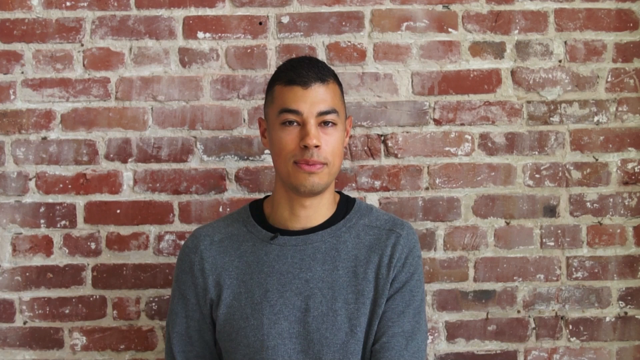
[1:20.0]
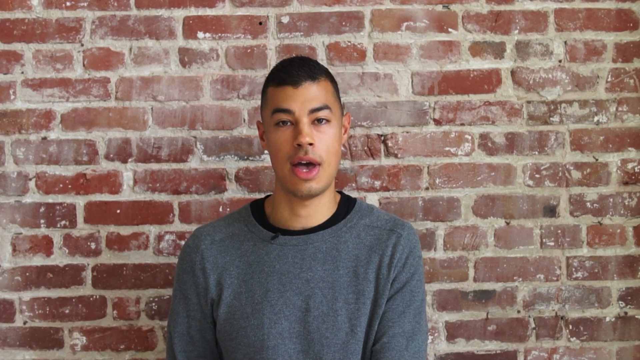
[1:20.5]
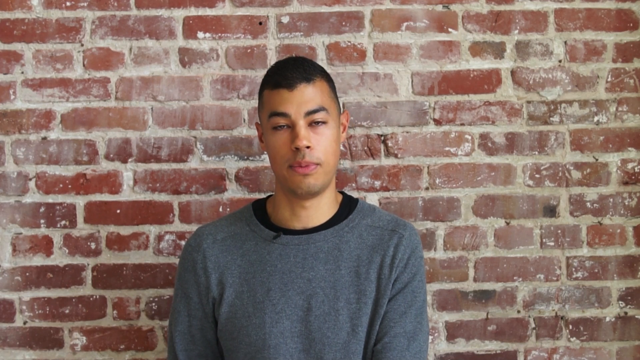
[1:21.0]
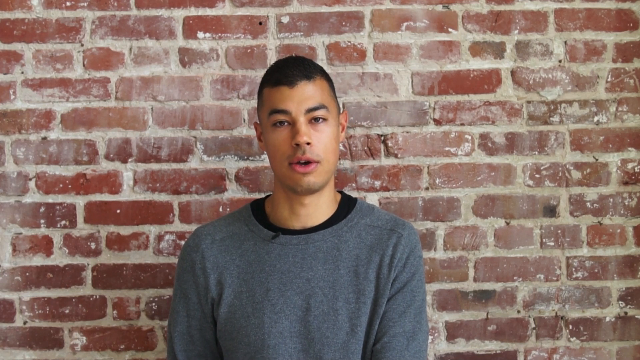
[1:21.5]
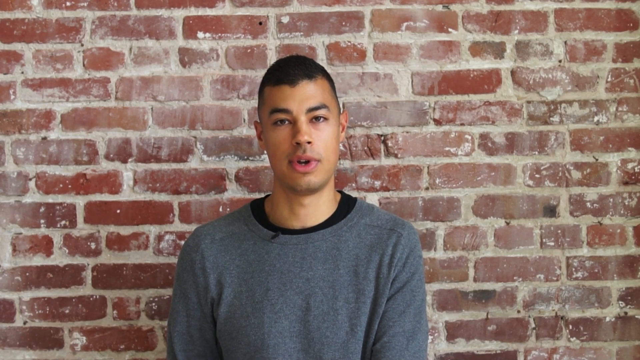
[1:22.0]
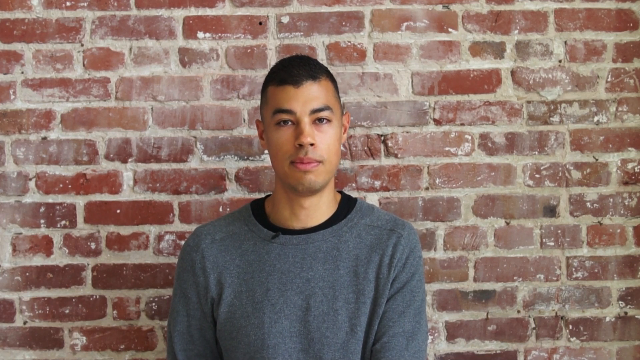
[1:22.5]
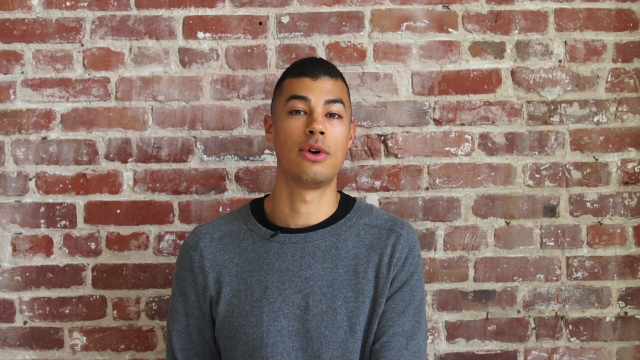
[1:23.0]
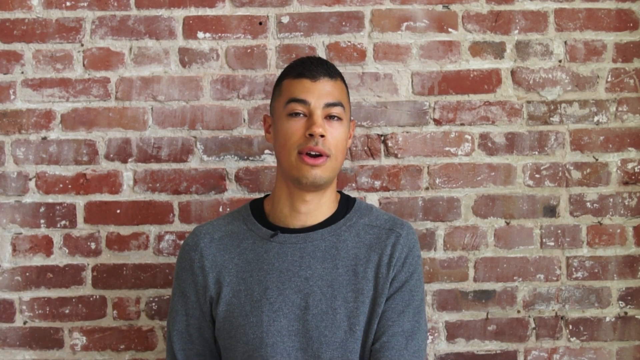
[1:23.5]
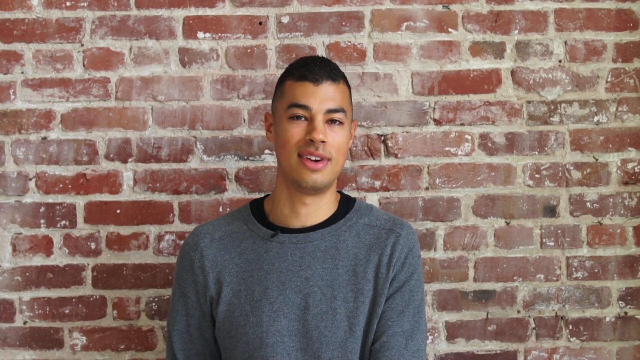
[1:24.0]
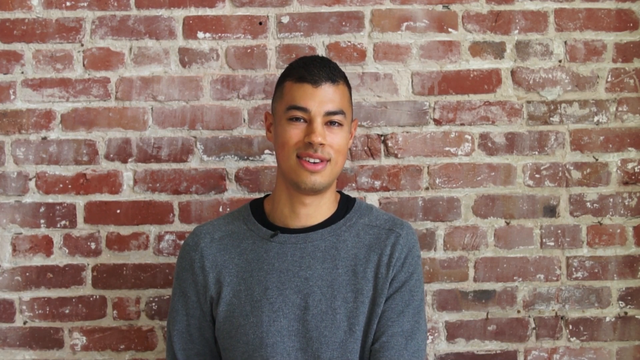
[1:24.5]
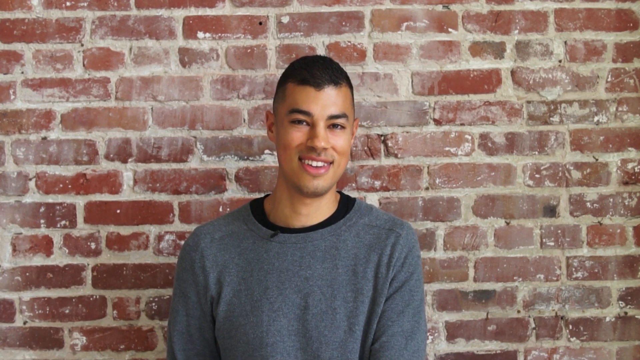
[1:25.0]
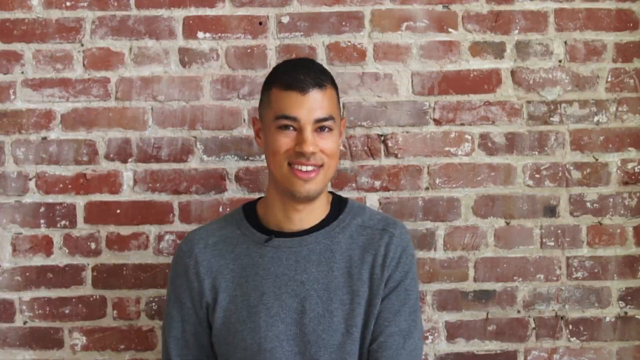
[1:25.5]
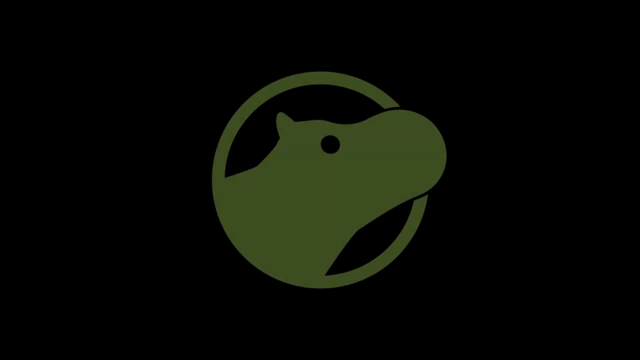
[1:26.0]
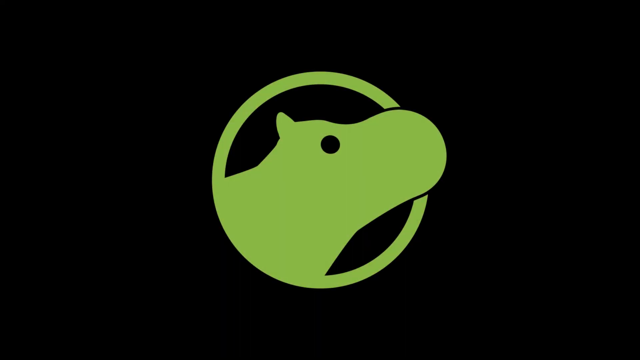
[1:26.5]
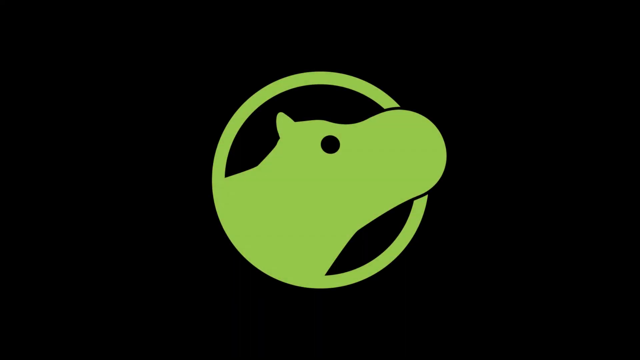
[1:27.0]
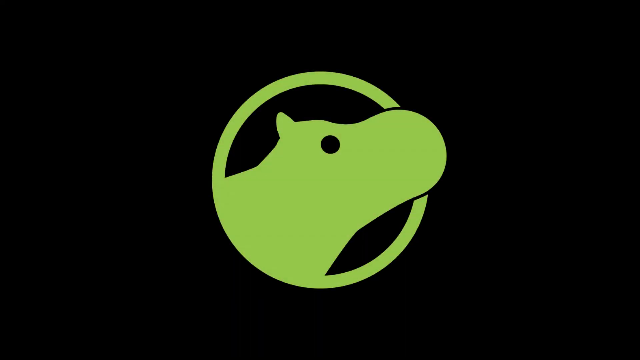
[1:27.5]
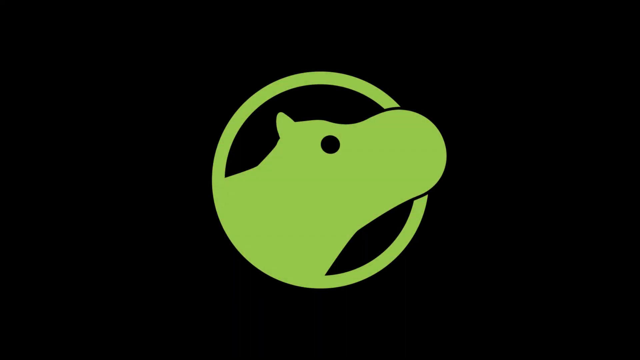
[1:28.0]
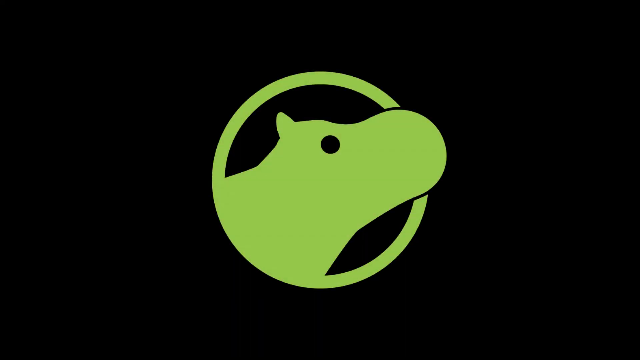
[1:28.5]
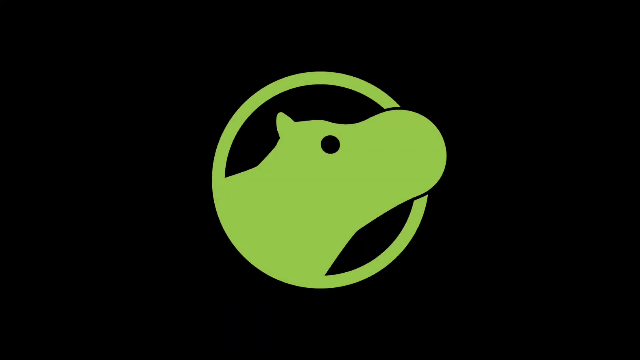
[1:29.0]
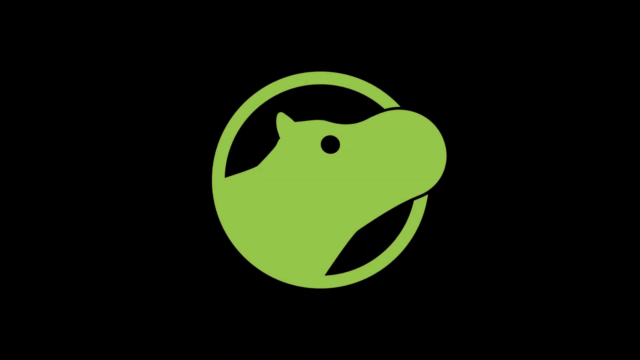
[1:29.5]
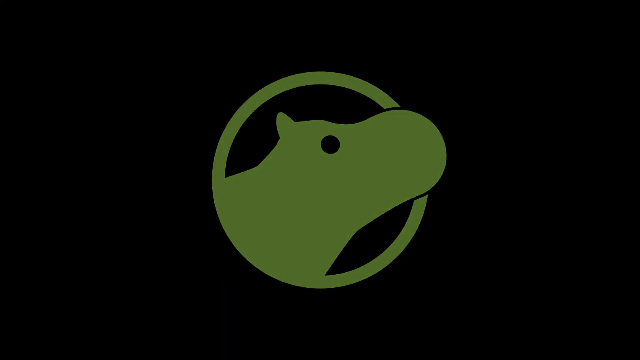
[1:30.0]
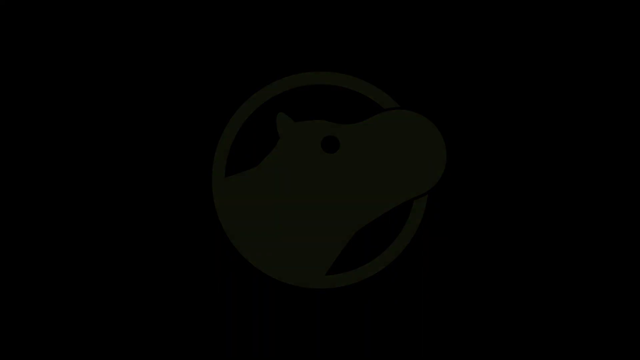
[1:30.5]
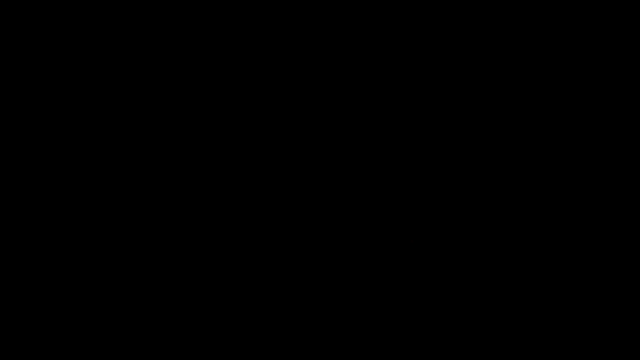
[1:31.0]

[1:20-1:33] The video pans in, or fades in, to the young man, who seems to be in his early 20s, standing in front of the brick backdrop in a thin grey sweater with a black undertop. There is no text on screen. He seems to be talking and smiles a little, and then the video pans out to the green Shippo company logo before the screen goes completely black.